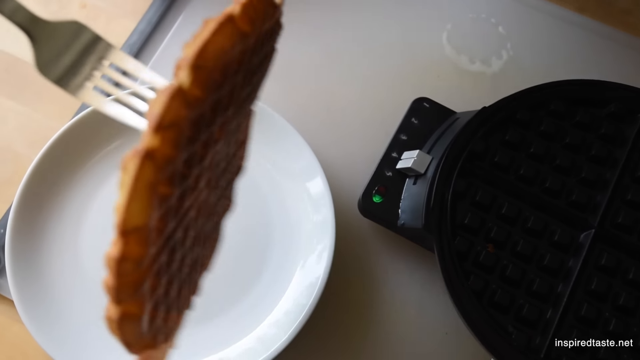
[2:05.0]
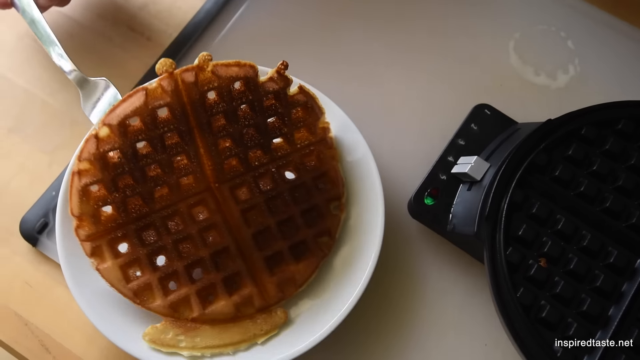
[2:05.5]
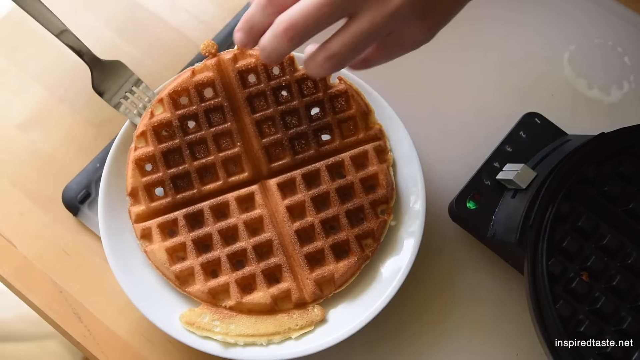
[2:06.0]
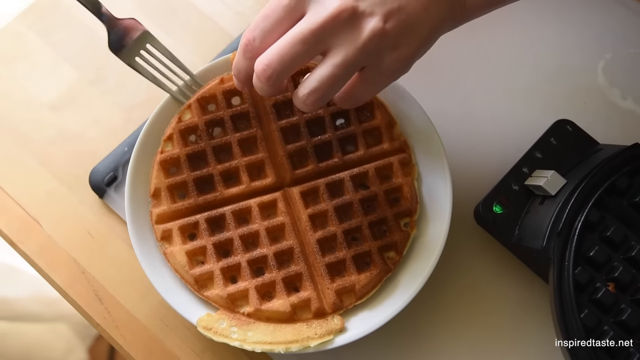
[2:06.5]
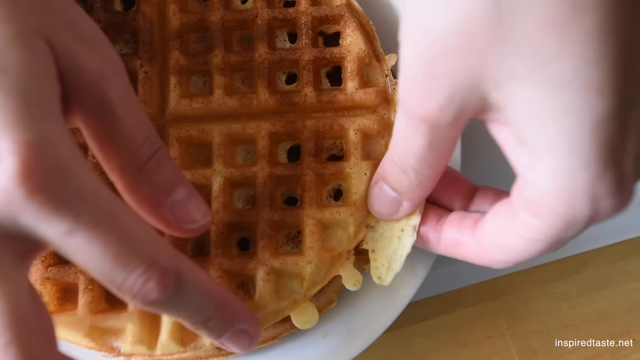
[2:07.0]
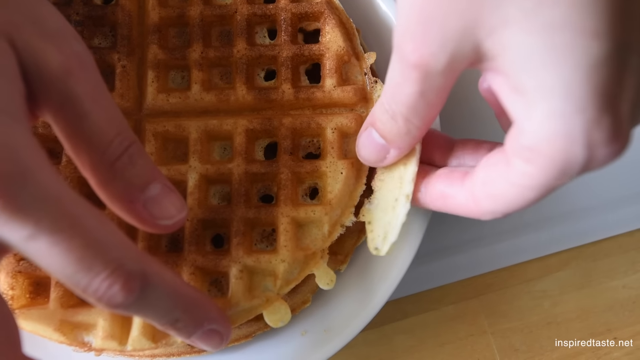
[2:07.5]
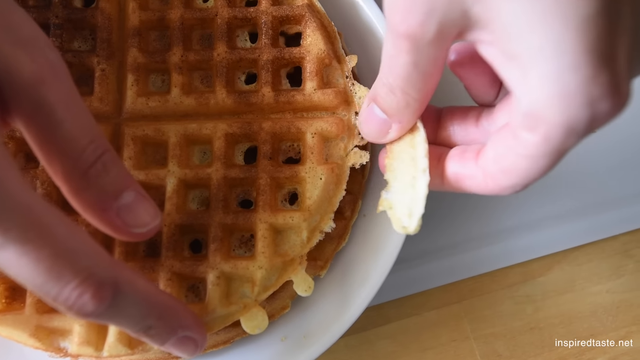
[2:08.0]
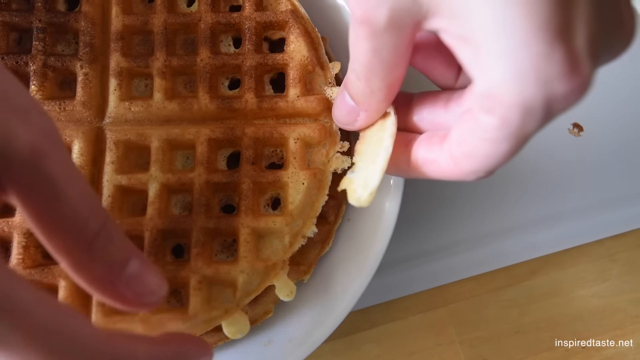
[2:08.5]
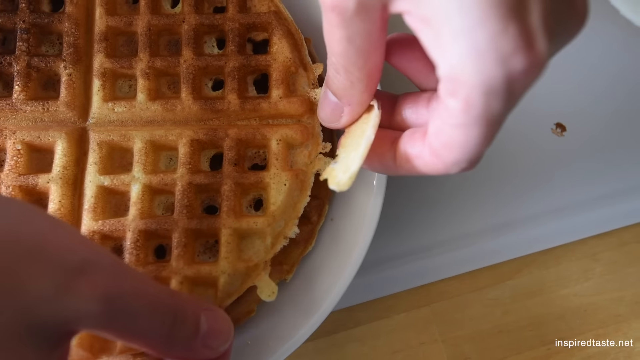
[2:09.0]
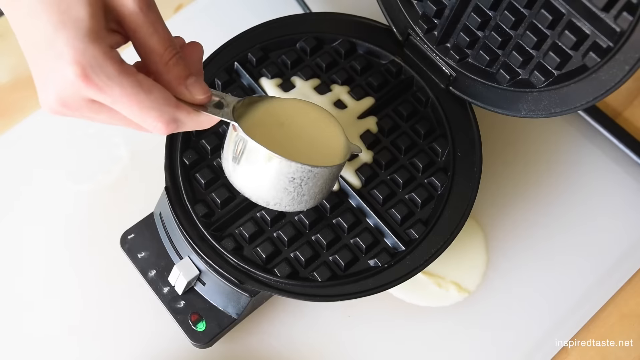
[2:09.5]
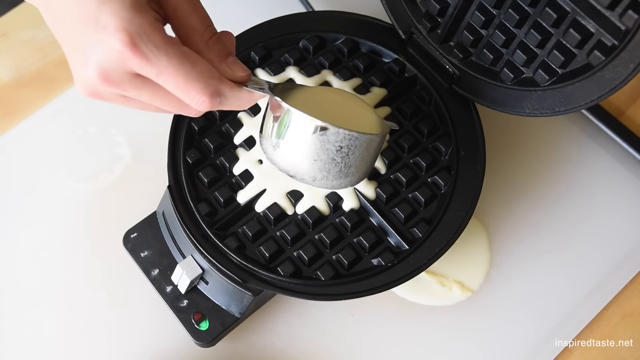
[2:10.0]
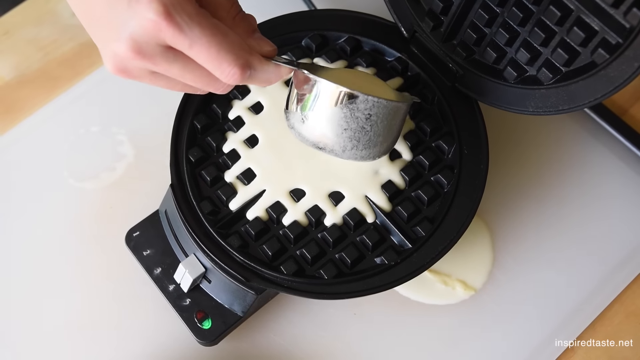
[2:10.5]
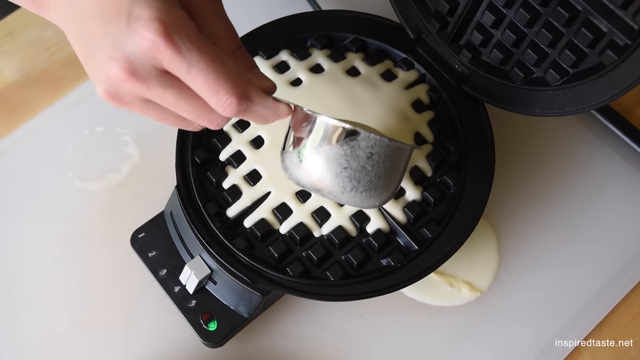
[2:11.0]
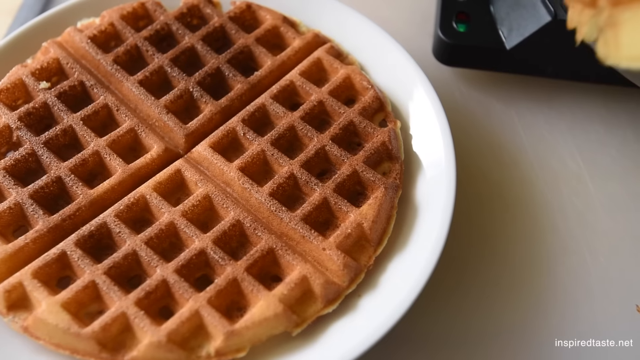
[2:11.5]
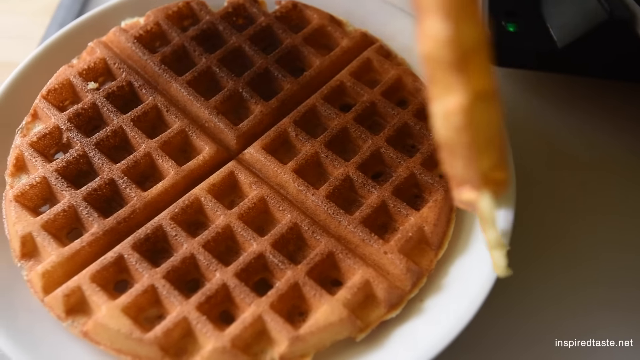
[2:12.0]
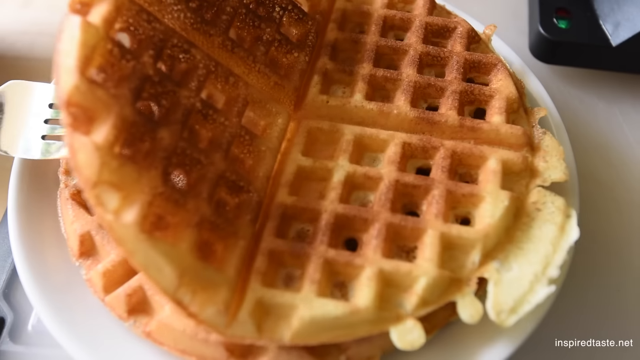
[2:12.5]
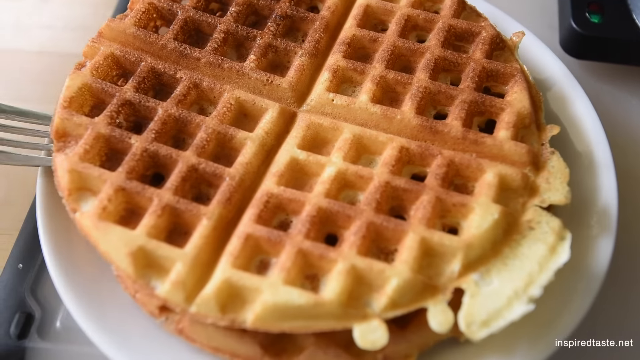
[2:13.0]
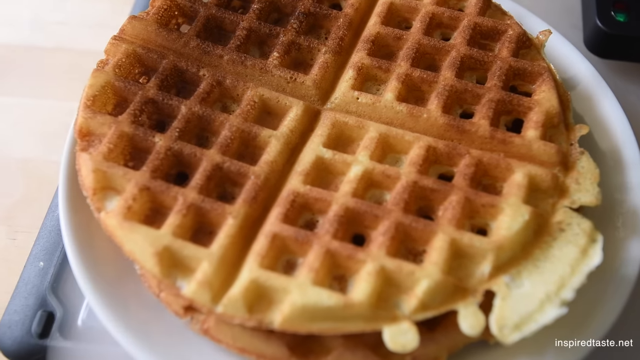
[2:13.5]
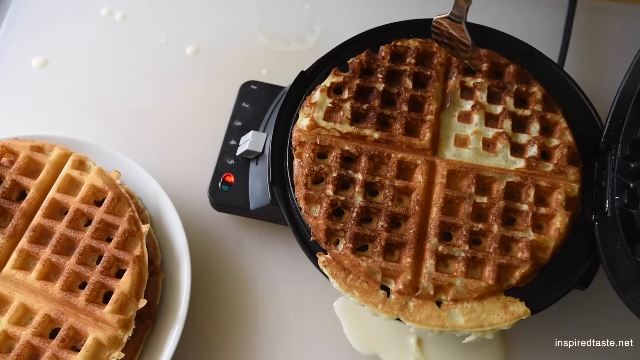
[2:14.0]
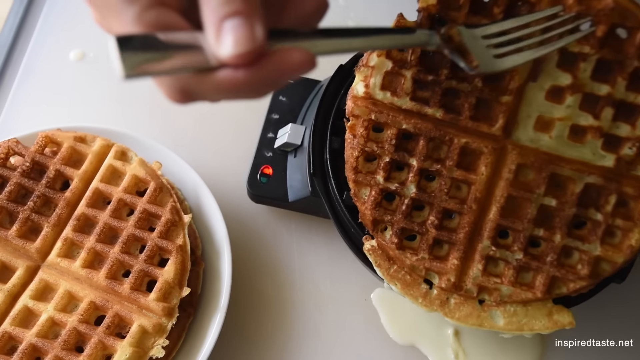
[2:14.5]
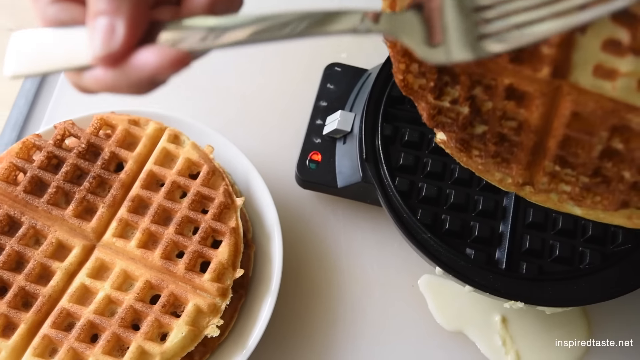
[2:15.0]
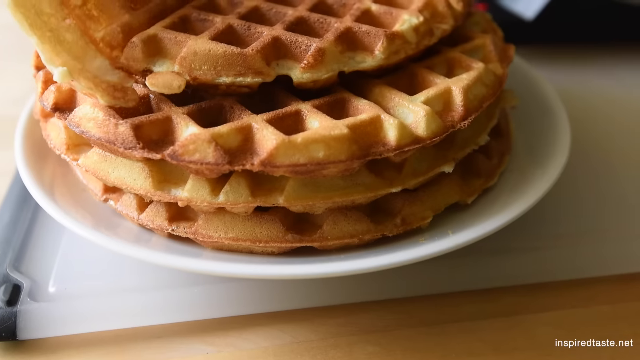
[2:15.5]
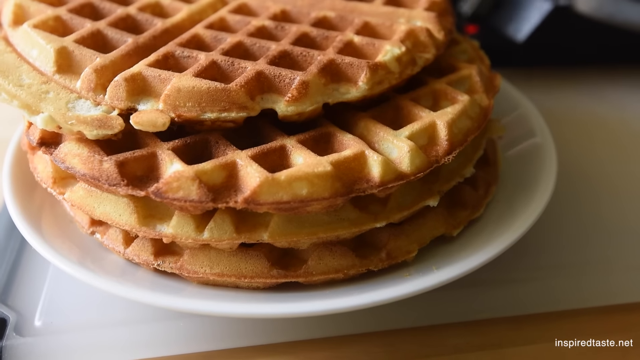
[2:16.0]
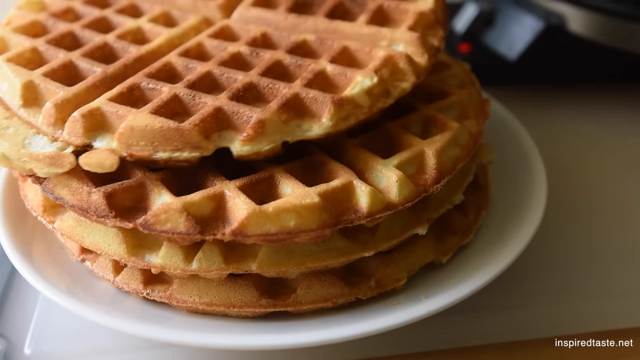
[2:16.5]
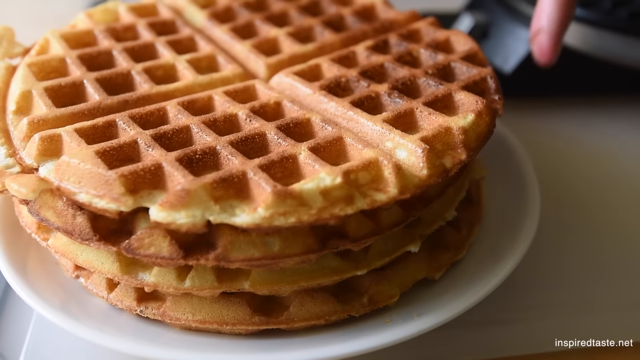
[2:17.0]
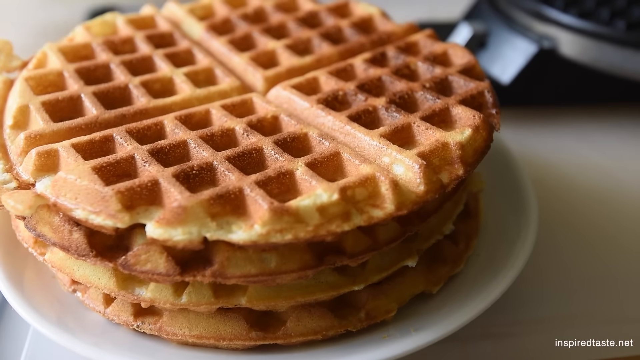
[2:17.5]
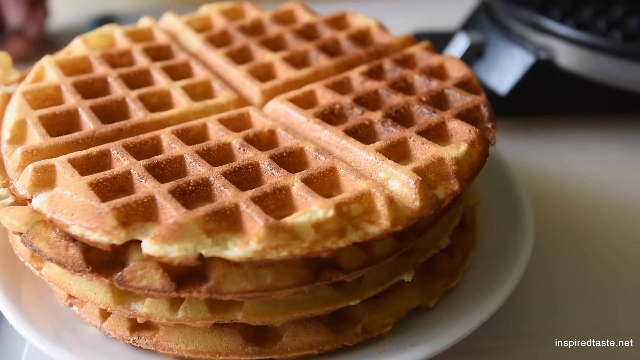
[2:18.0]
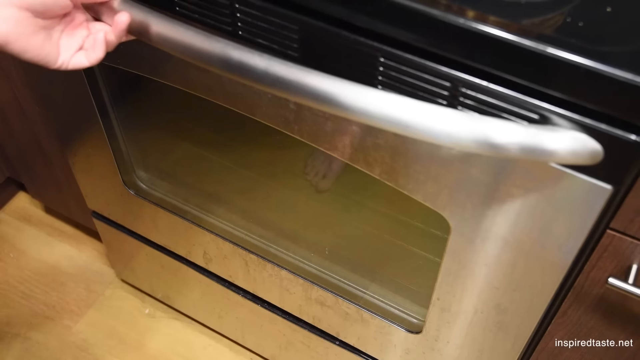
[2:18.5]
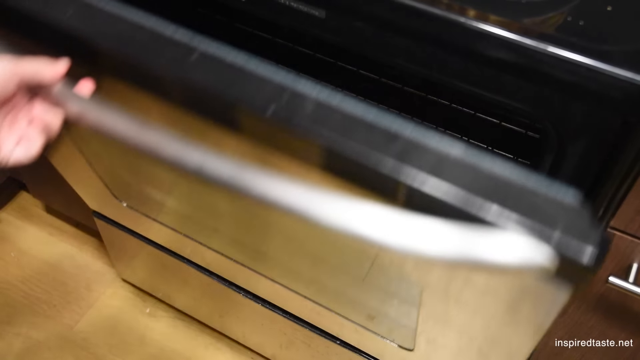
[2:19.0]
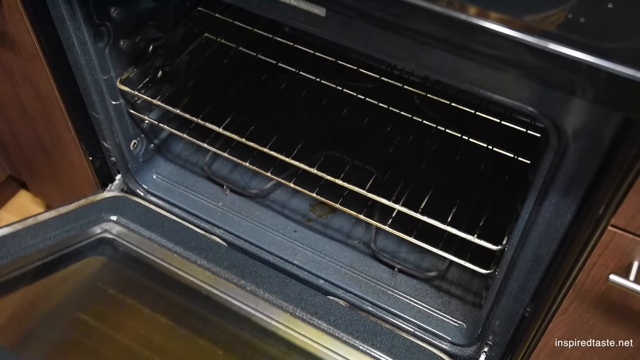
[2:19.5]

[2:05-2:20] The YouTube video's front page shows the title "Easy Crispy Waffles Recipe", a play button in the center, and a still of a pile of waffles with syrup and butter on a white plate, with strawberries next to them. After play is pressed, a fork and a left hand put a waffle onto a white plate. The next scene shows waffle batter poured into the waffle iron and a second waffle being pulled off; the batter runs out over the waffle iron and makes a puddle on the counter. This is repeated a few times until there is a stack of four waffles piled up on the plate. Once the edges have been pulled off their sides, someone leans down and opens an oven with their left hand.